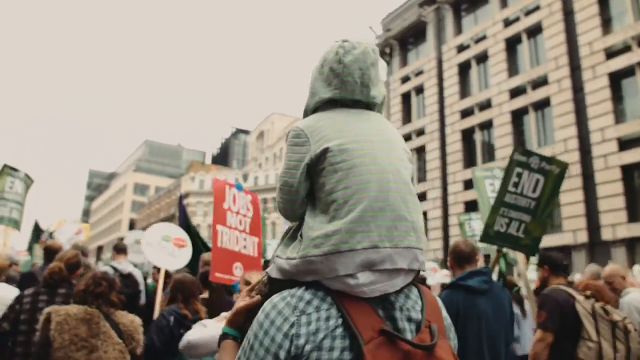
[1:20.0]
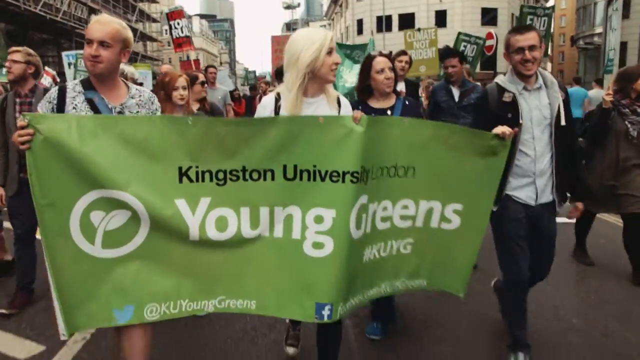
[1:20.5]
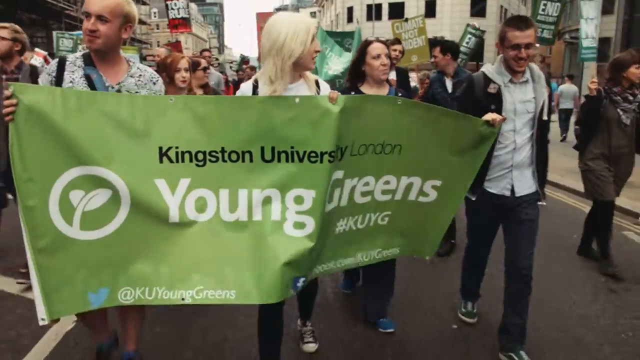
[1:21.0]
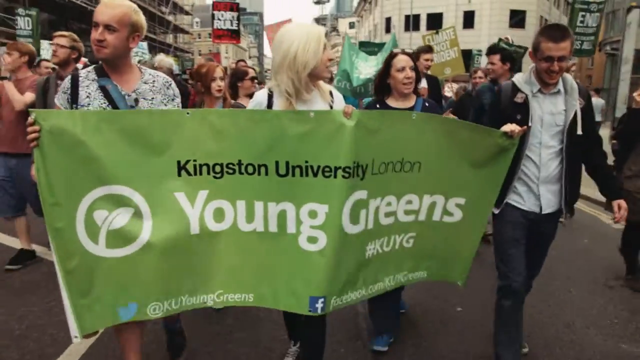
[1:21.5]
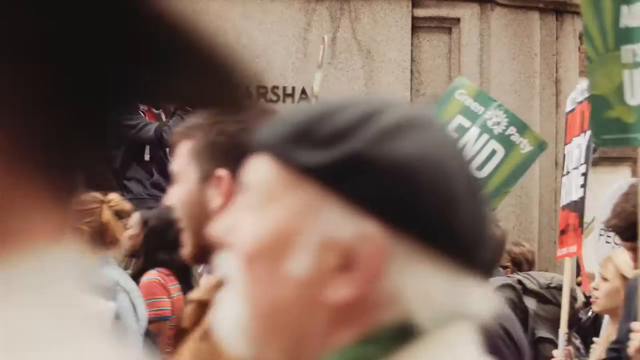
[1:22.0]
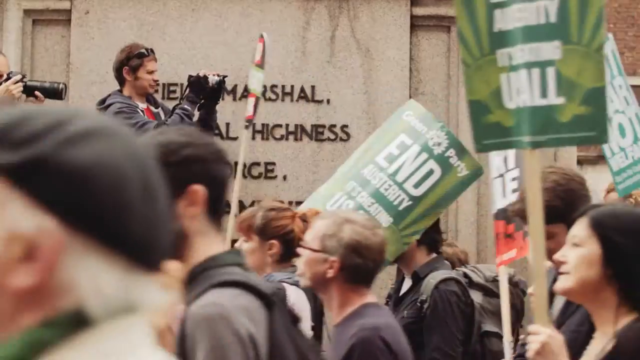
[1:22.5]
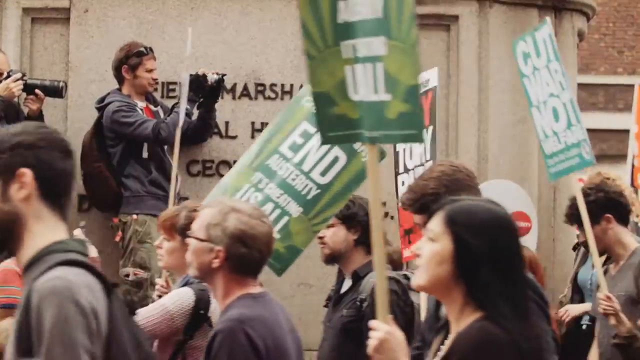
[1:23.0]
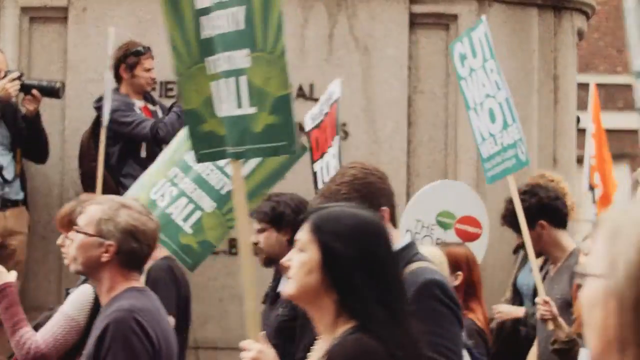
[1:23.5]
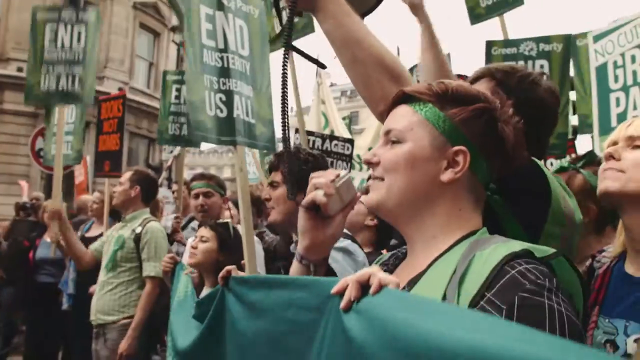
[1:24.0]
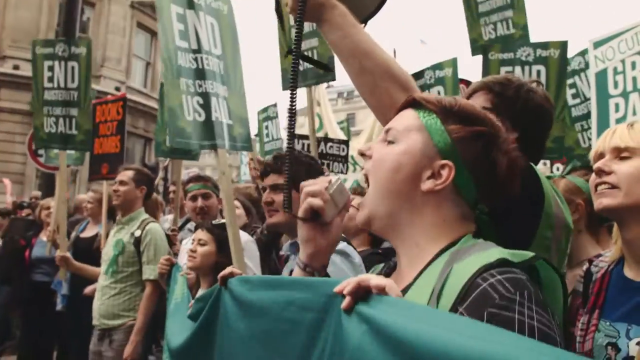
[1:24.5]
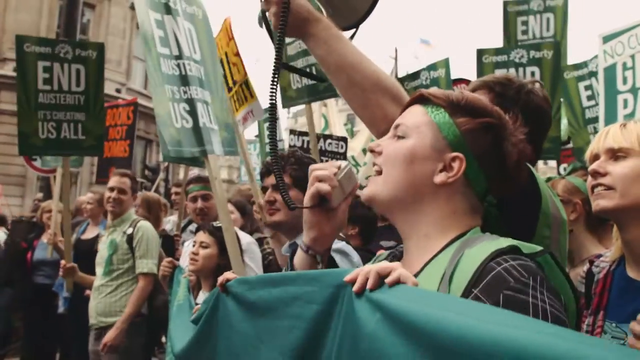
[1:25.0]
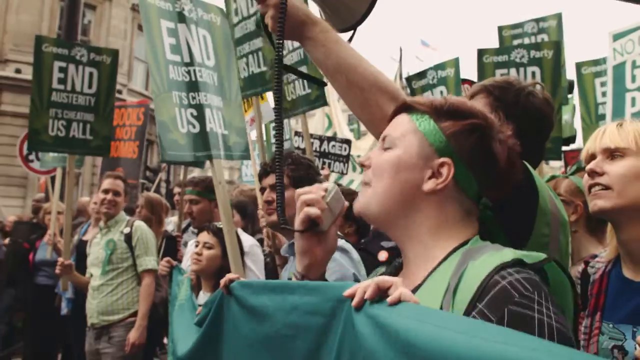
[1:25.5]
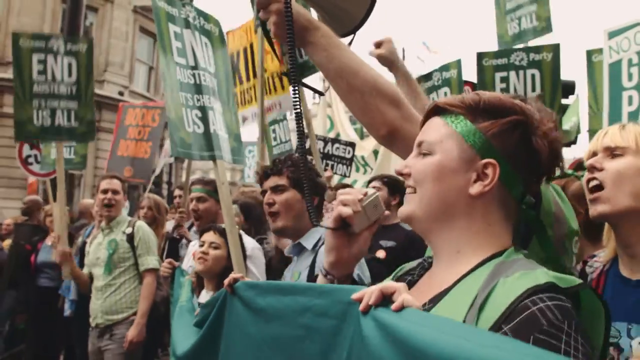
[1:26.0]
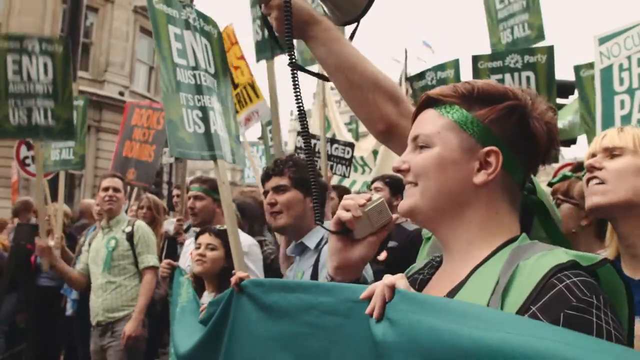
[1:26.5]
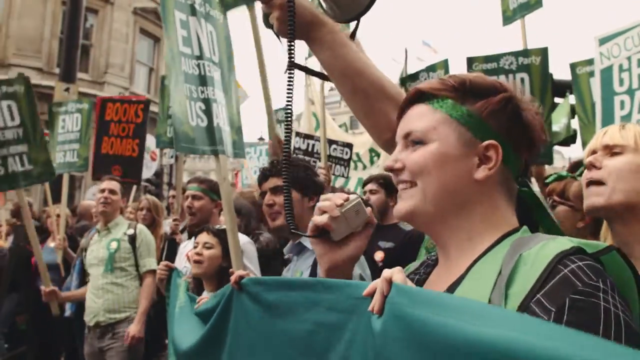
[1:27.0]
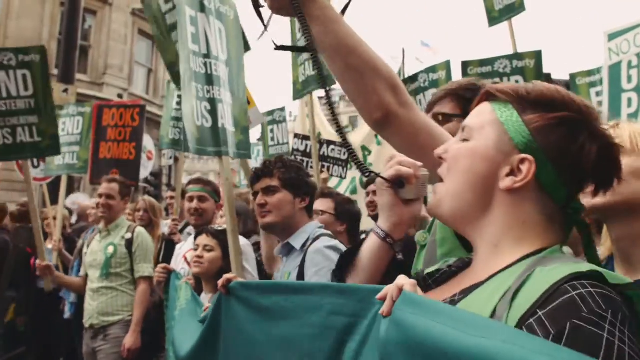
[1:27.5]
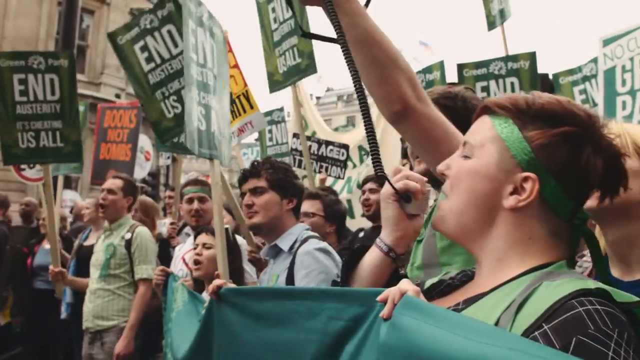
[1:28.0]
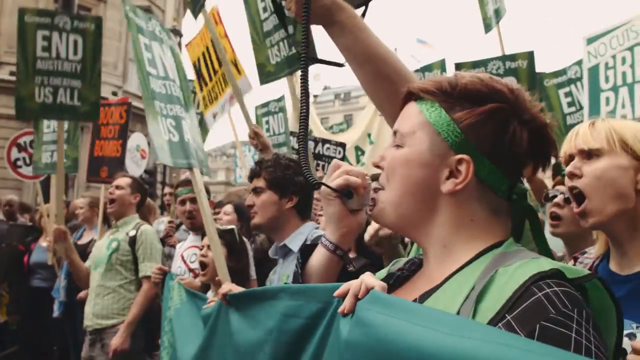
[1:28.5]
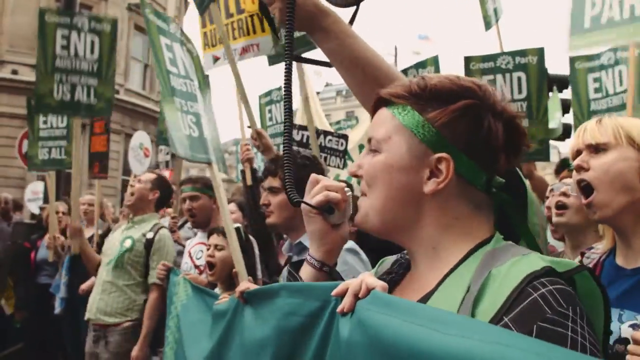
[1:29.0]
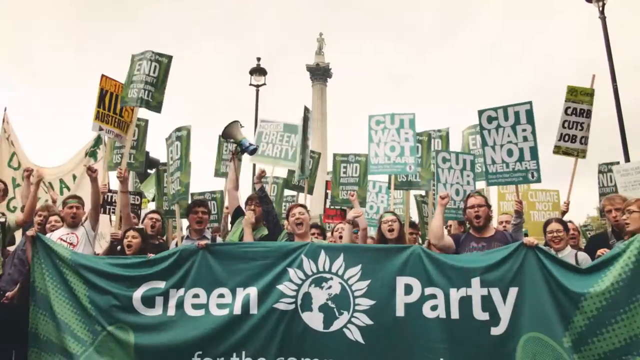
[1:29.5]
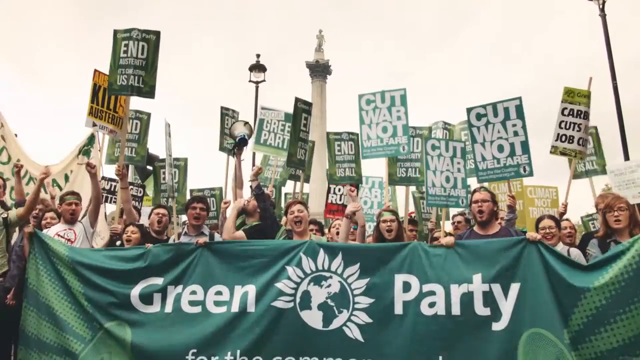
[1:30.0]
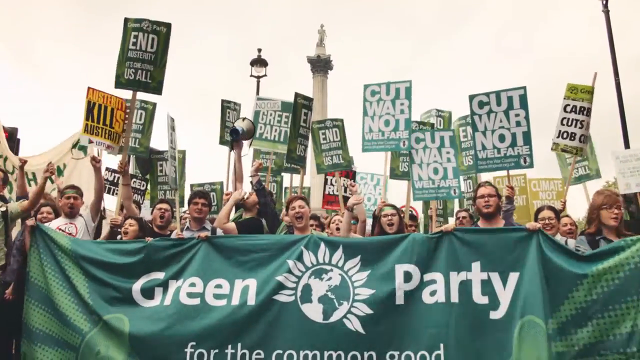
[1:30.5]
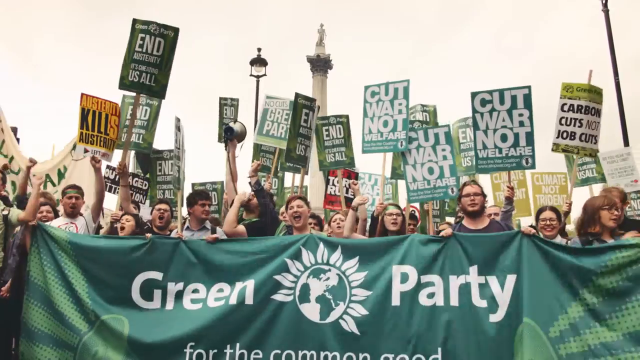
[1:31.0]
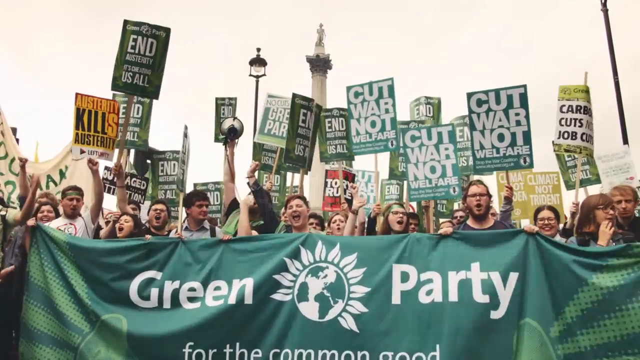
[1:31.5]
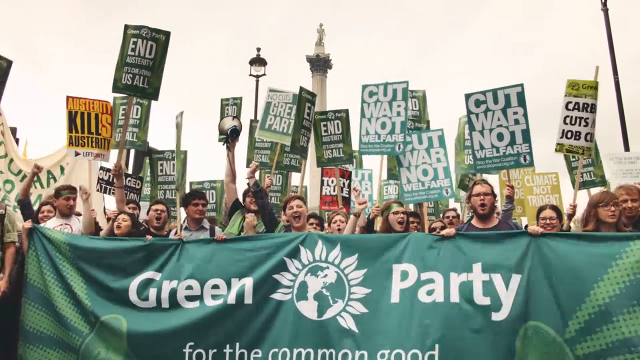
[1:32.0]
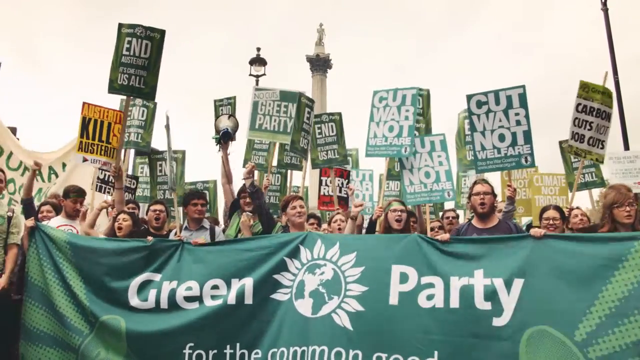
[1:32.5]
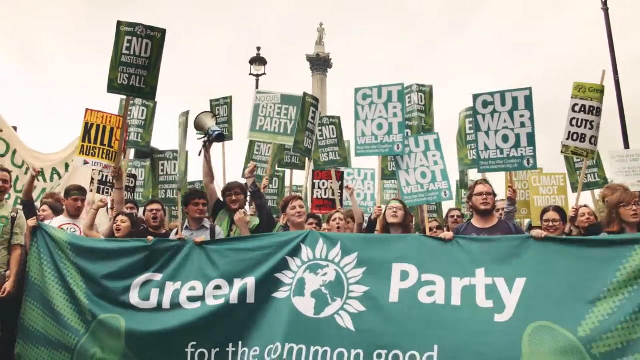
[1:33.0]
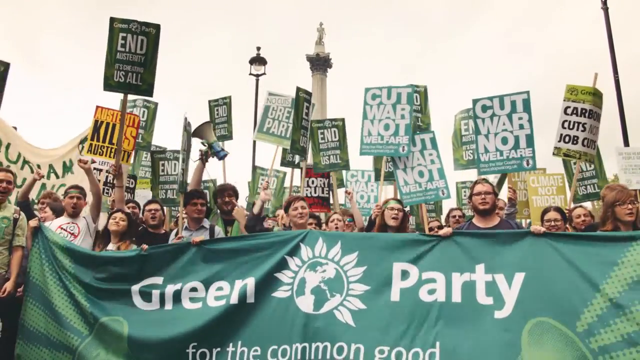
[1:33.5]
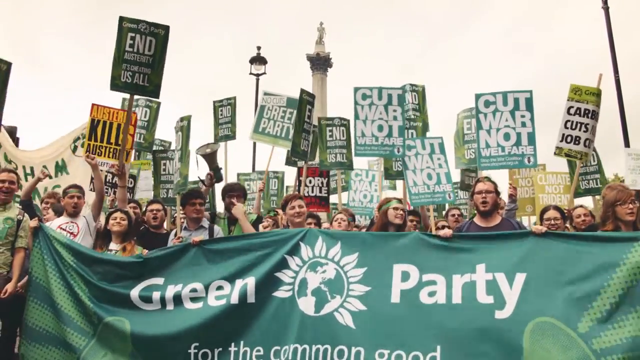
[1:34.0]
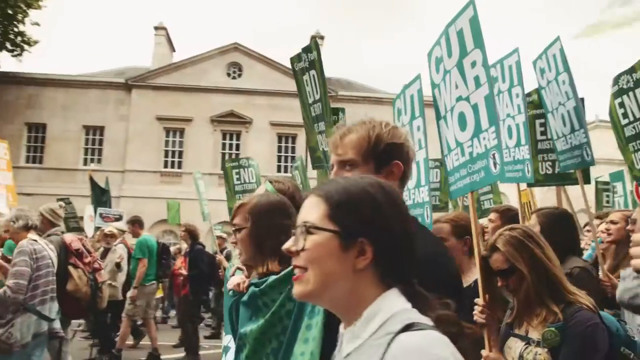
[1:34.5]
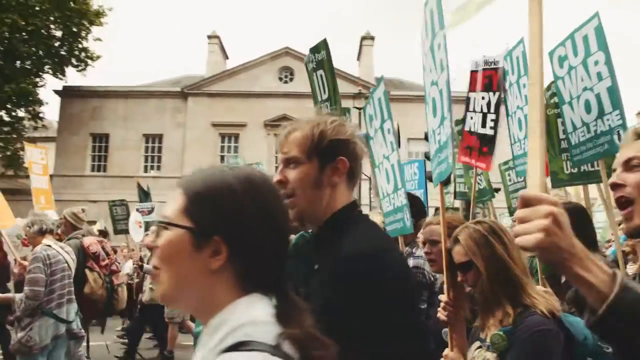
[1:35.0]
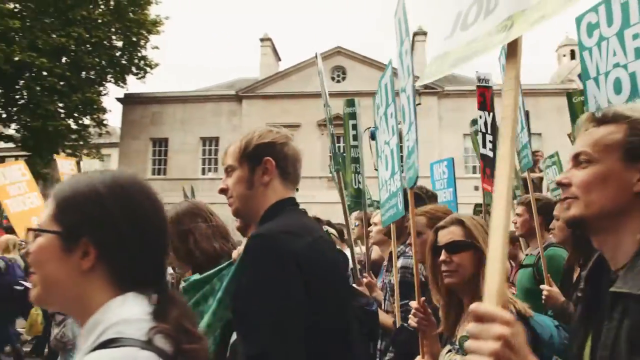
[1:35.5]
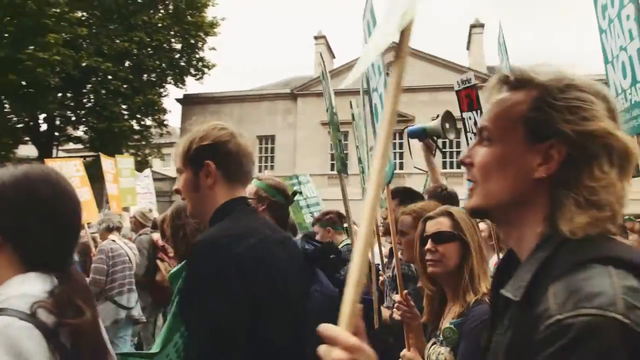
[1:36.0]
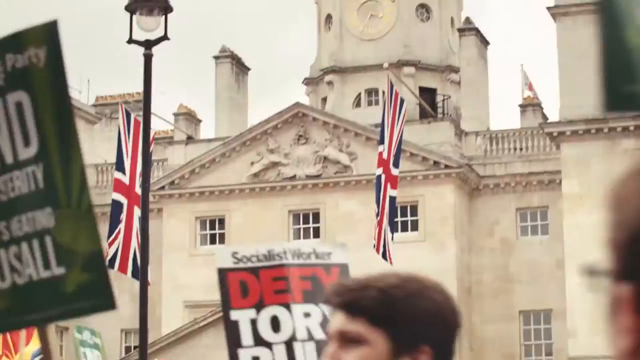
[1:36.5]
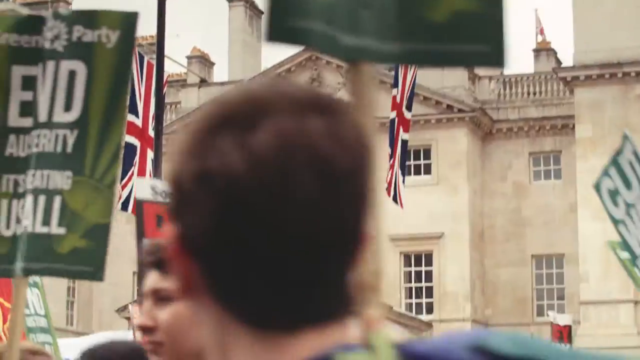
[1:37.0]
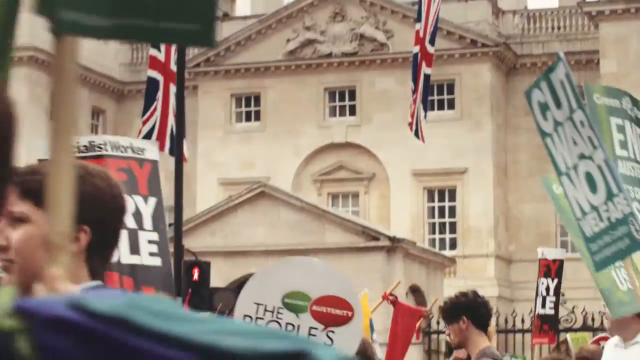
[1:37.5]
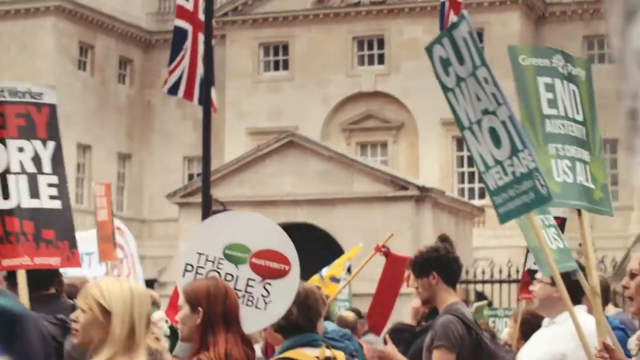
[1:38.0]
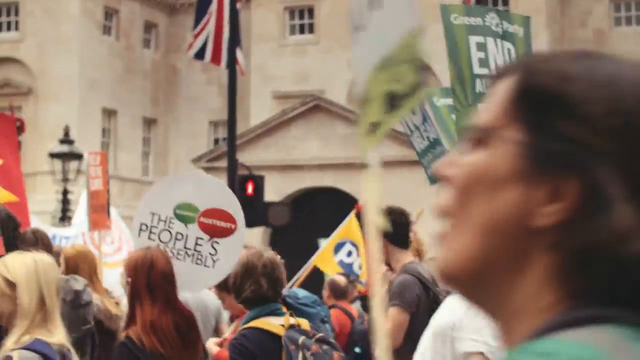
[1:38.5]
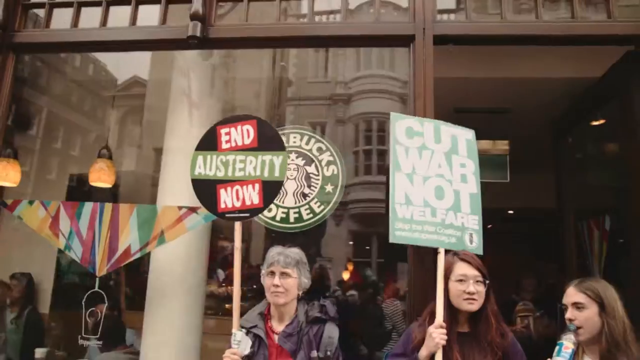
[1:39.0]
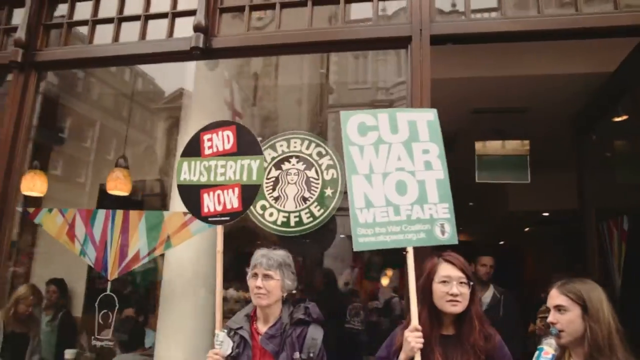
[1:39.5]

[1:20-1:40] A child wearing a light green raincoat with the hood up rides on the shoulders of an adult, apparently her parent, as they march along. Placards read "Green Party, end austerity, it's cheating us all," and one reads "jobs not trident." The sky is white and overcast, probably with light rain. The march seems to be moving through a city center, with many concrete buildings on the left and right. The camera pans quickly to a tarpaulin reading "Kingston University, London, young greens, #K-U-Y-G, at K-U Young Greens," along with a Facebook channel that cannot be made out. Three young Caucasian people hold the tarpaulin. The man on the left, holding one edge, wears a multicolored shirt and has blonde hair with his forehead showing a bit. A woman with long blonde hair in the middle wears a white shirt. The man on the far right, holding the other edge, wears prescription glasses, what looks like a navy blue sporty jacket with the hood down, an off-white or possibly light blue polo underneath, and apparently jeans.